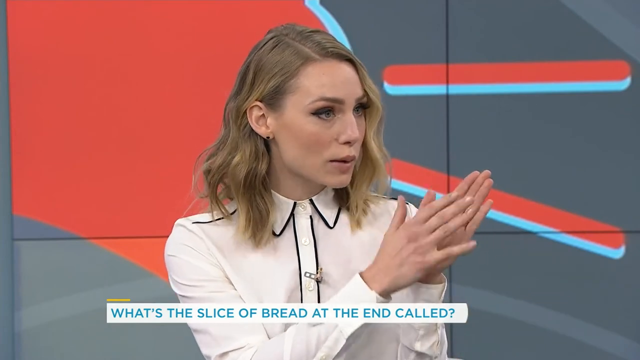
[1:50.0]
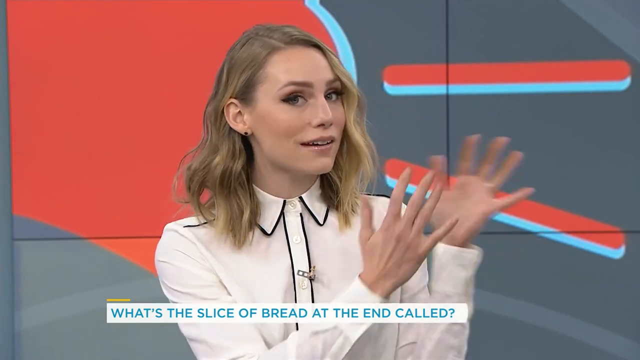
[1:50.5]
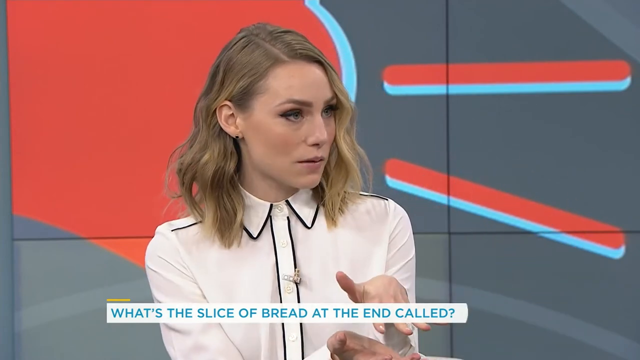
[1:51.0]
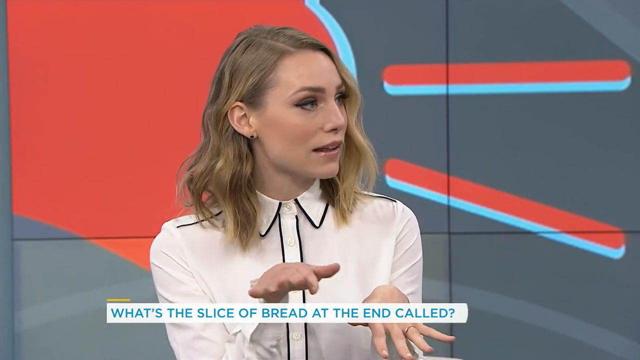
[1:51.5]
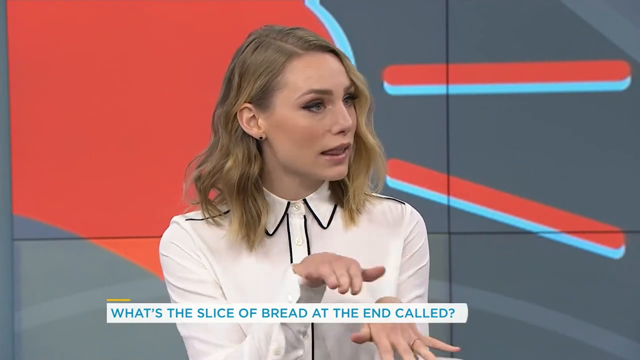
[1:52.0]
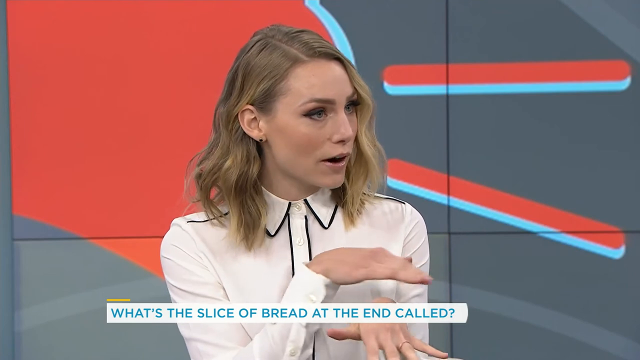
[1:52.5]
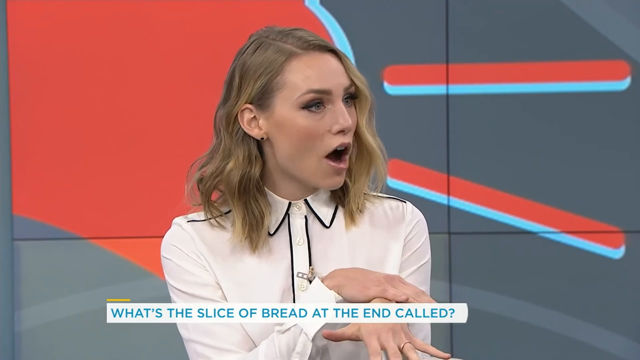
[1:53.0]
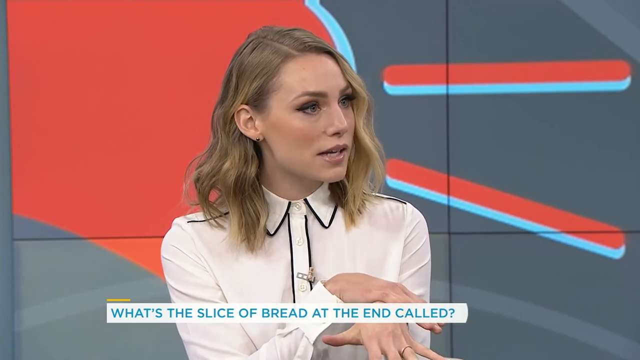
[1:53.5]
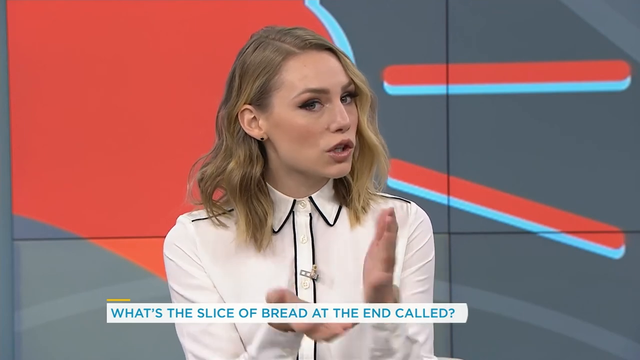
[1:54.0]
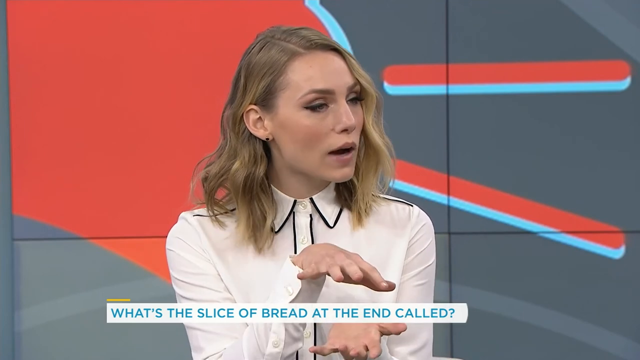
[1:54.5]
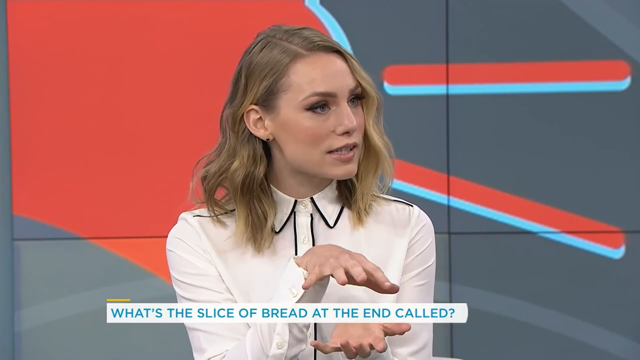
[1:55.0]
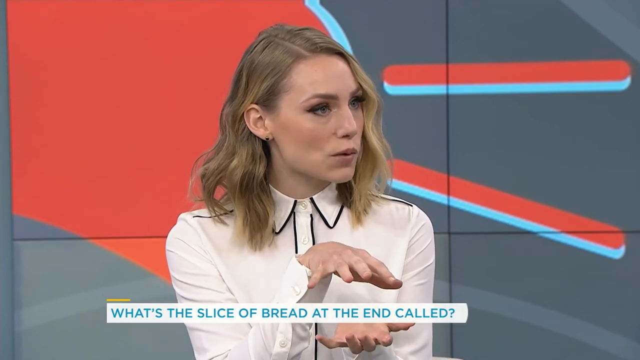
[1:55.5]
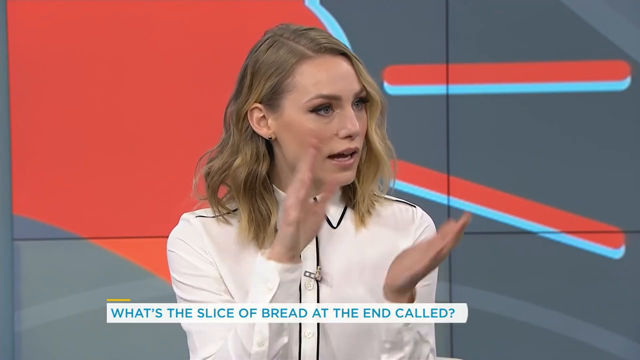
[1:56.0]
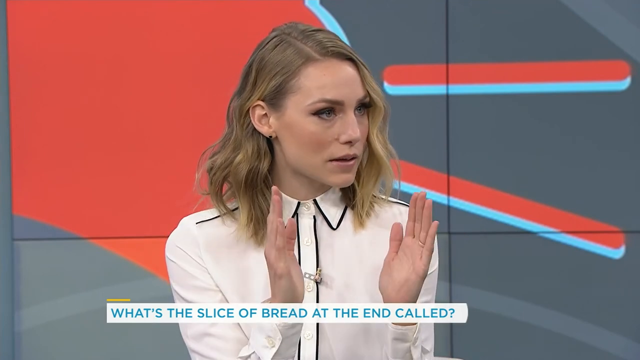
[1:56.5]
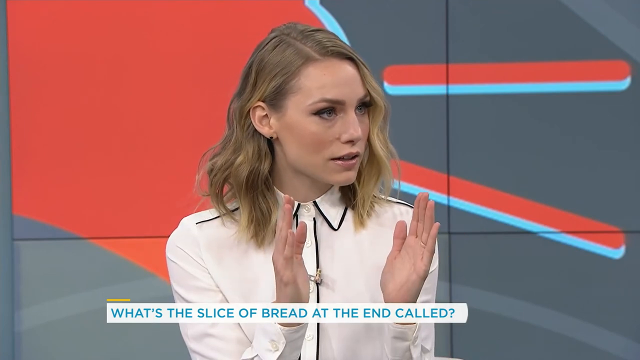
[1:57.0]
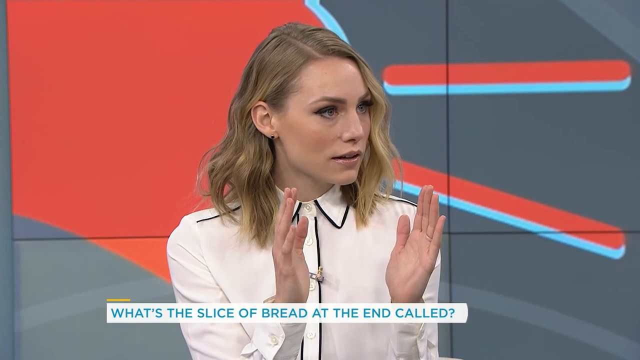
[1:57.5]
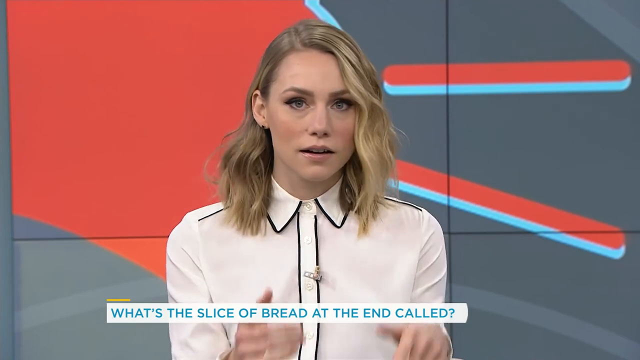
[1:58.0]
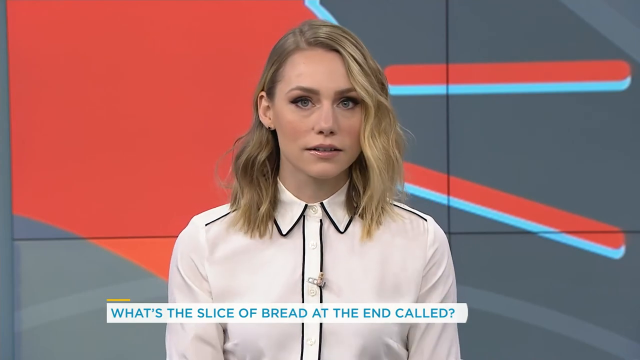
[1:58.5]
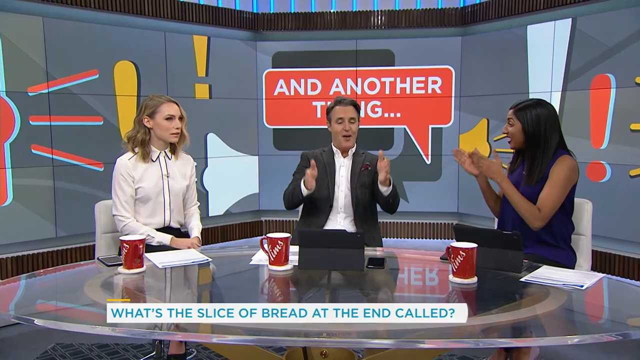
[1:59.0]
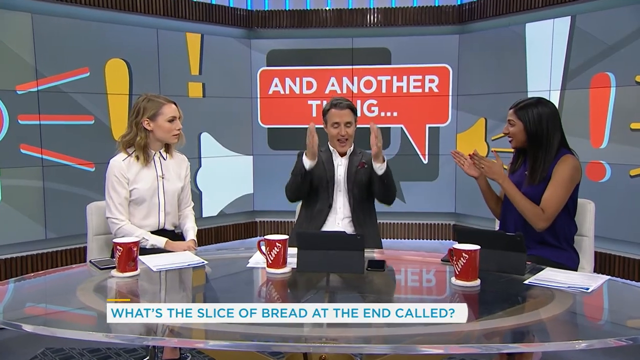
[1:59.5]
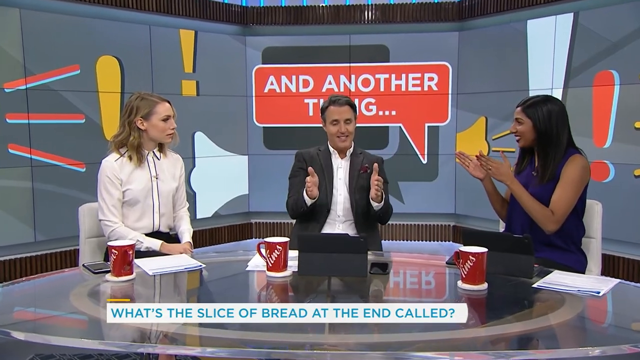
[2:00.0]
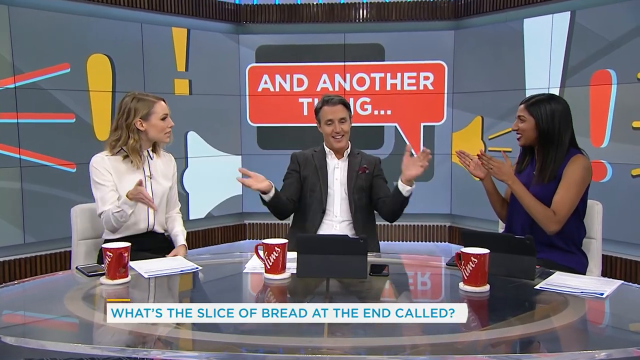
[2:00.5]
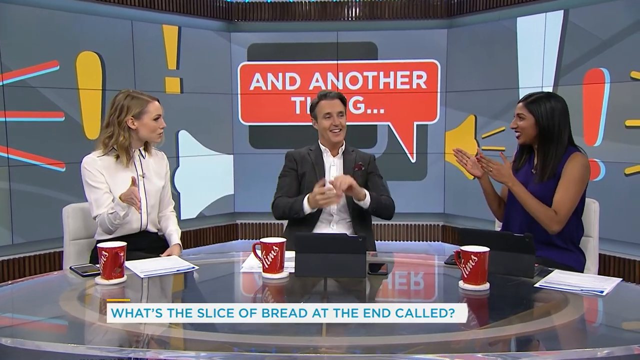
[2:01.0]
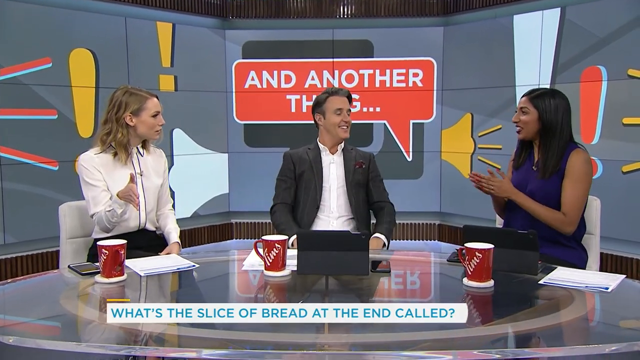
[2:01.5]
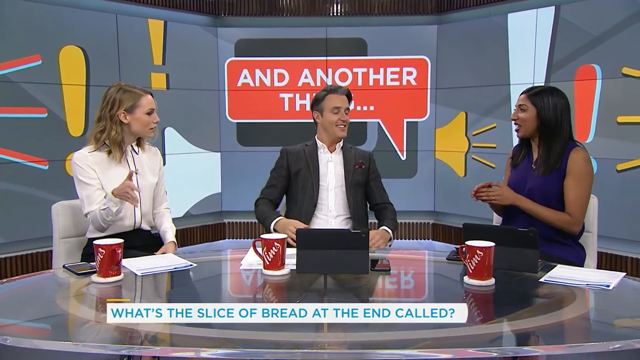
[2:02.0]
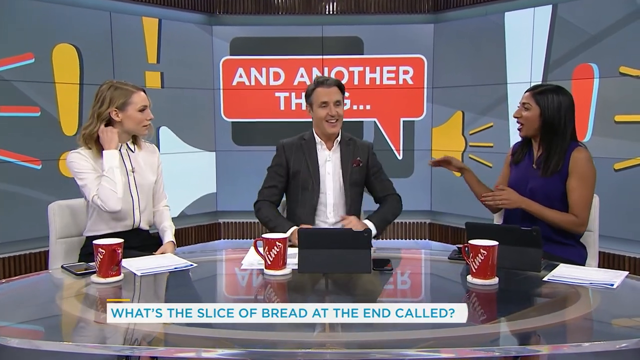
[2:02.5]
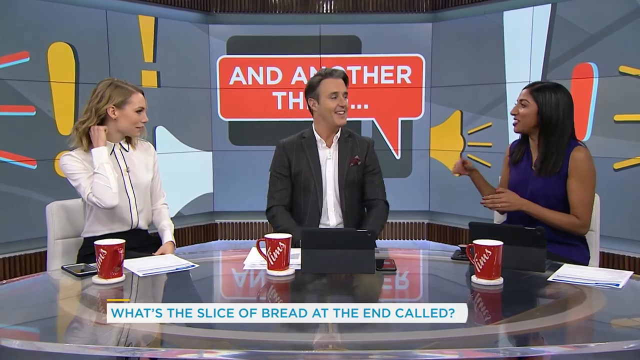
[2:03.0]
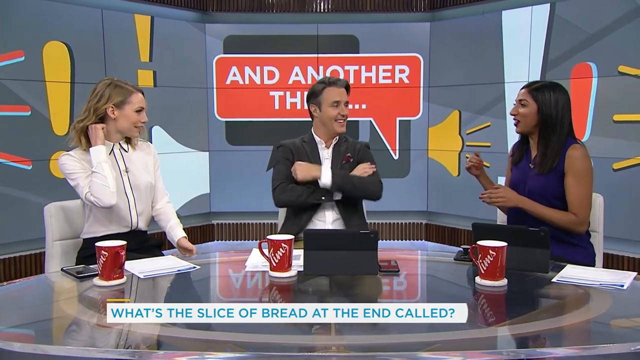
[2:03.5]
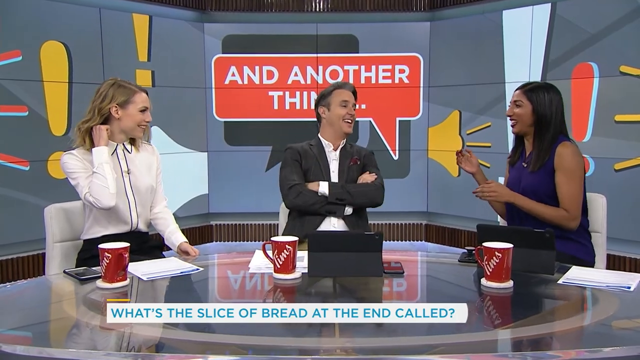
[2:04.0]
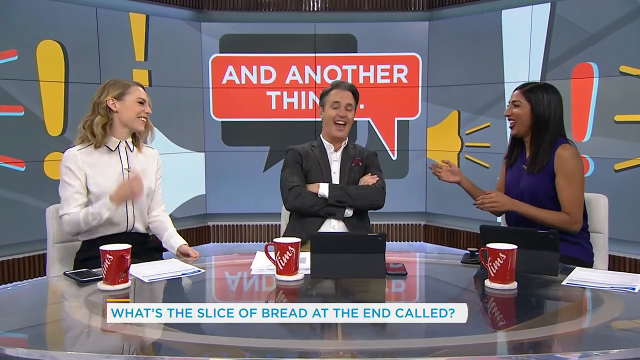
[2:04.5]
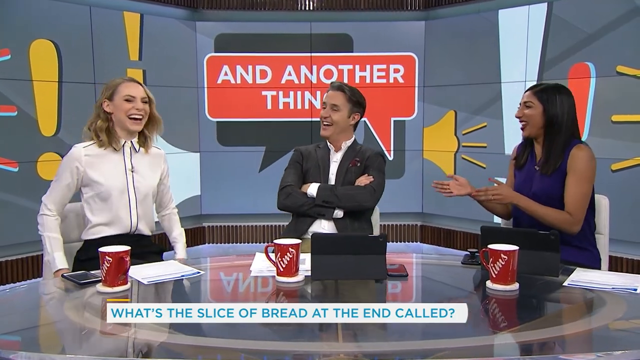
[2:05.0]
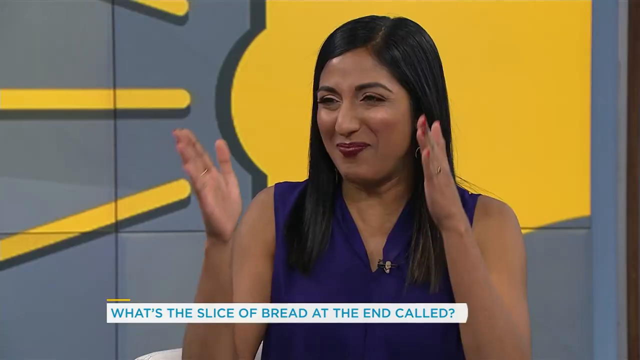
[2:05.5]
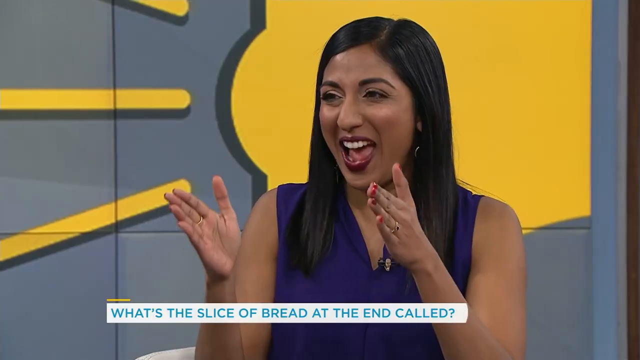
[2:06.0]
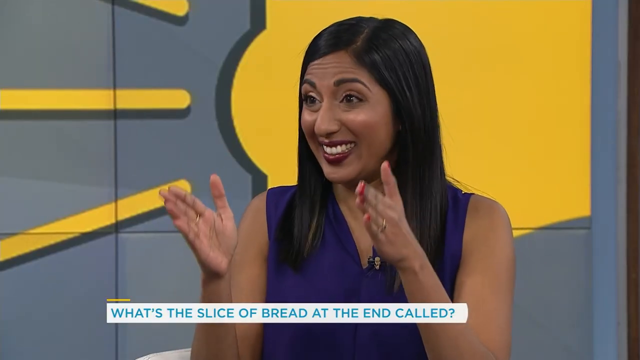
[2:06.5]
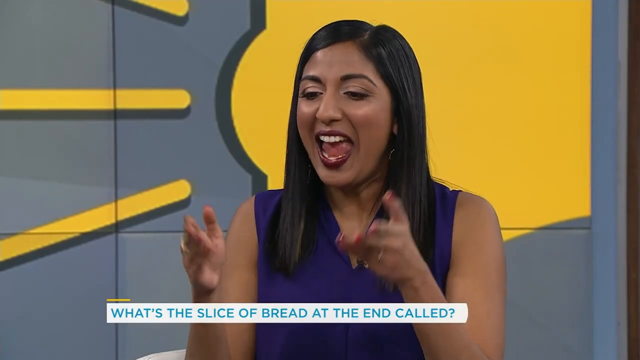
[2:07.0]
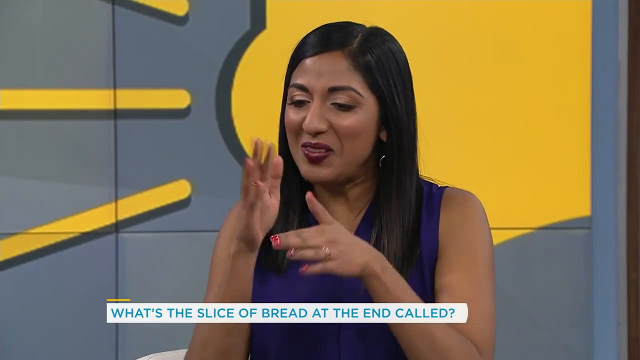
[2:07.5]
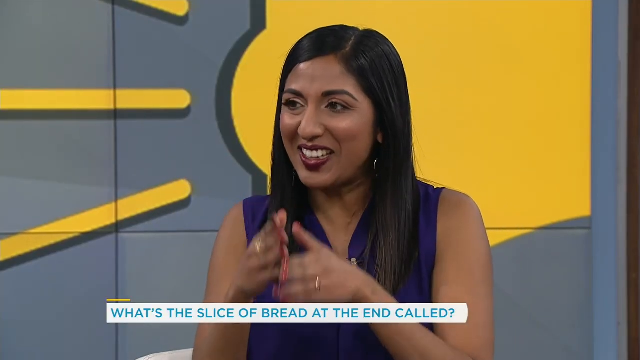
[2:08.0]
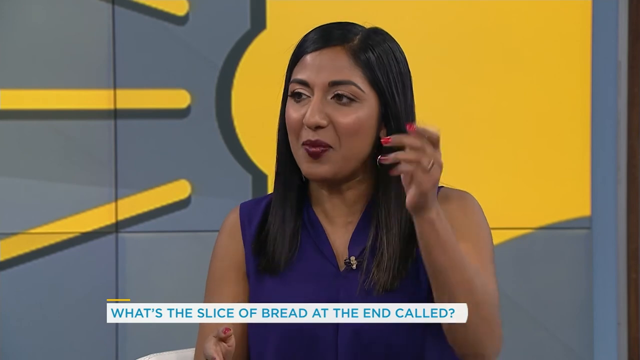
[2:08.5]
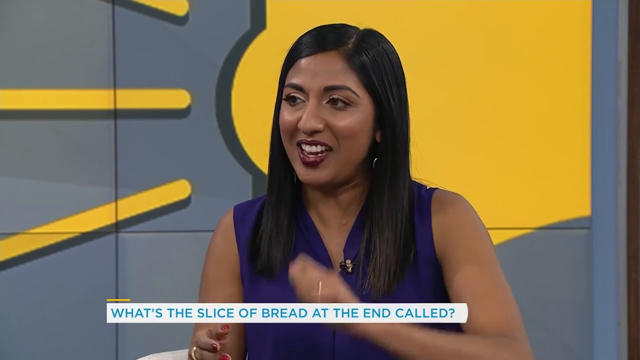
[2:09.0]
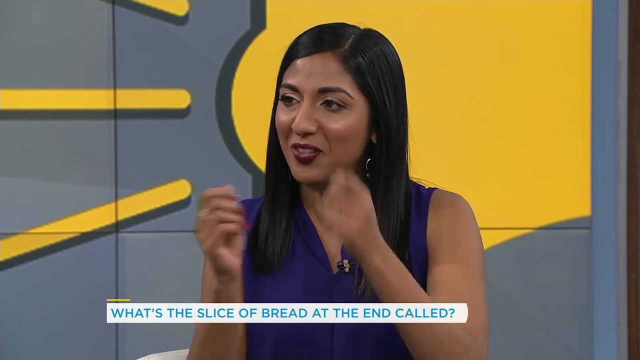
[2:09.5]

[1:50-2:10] A close-up shows the woman in white. Her white shirt has a black outline around part of the collar and along the seam running down, and white buttons. She does not appear to wear jewelry other than a small black piercing on her right ear. Her hair seems medium to blondish, and she is probably in her mid-20s. She spreads her hands and turns them over in a sizing gesture in front of her while shaking her head. All three people, the man and the Indian woman included, make similar sizing gestures in front of them, holding their hands out and turning them end over end. The Indian woman talks with similar mannerisms, shaking her hands as she speaks. The camera zooms in on her: she wears hoop earrings, looks Indian, and has straight, chopped, jet-black hair. She has a small black microphone-like item at her V-neck, and her shirt is sleeveless and seems indigo. Behind her appears to be an animated sun with a few rays sticking out as lines.